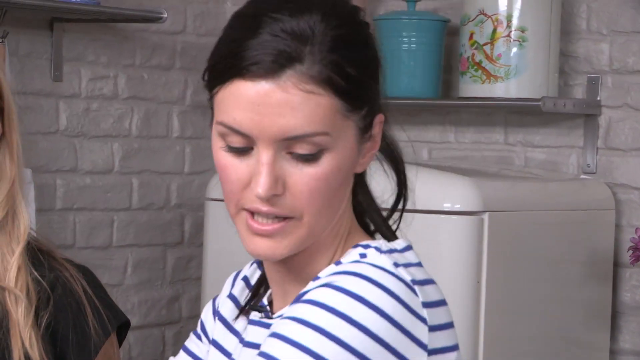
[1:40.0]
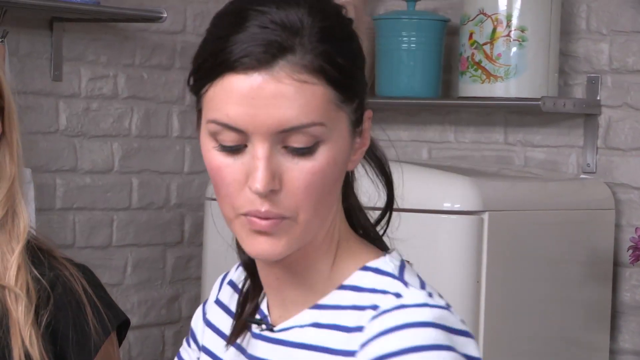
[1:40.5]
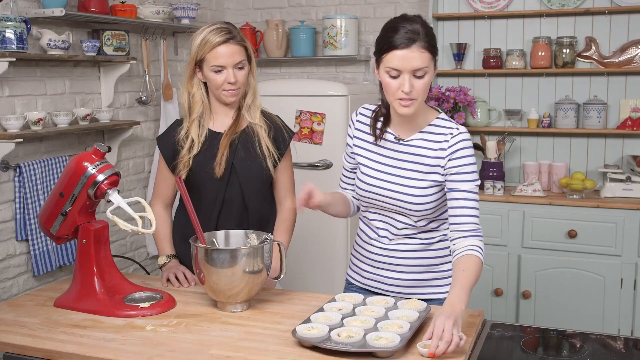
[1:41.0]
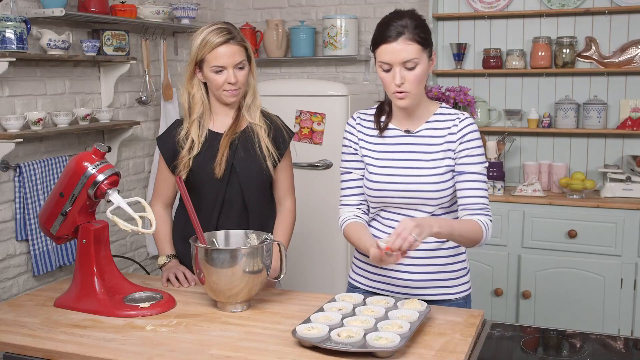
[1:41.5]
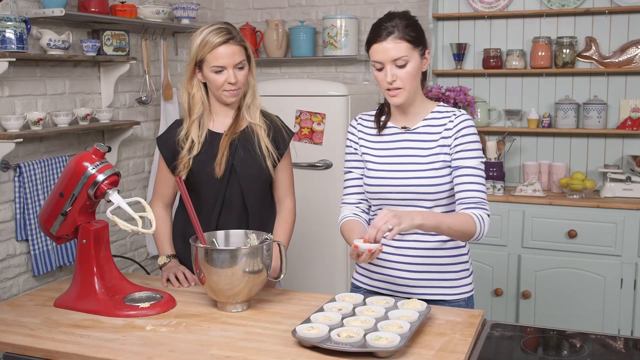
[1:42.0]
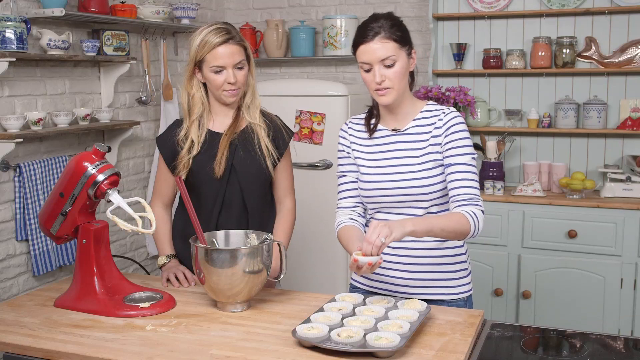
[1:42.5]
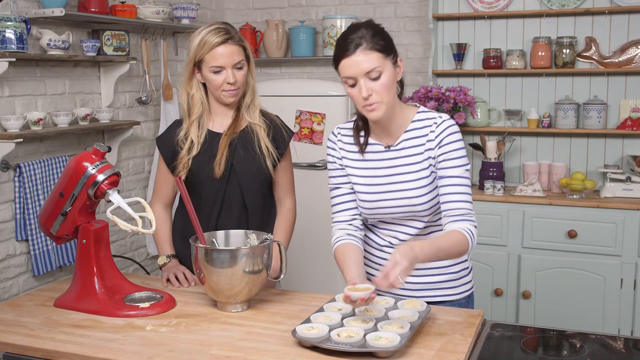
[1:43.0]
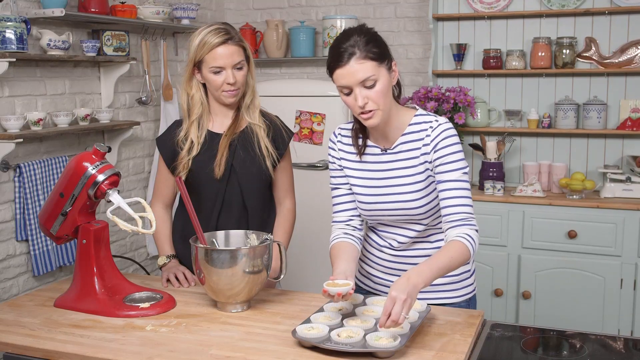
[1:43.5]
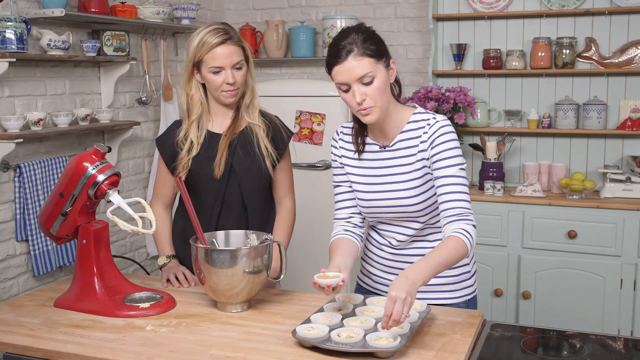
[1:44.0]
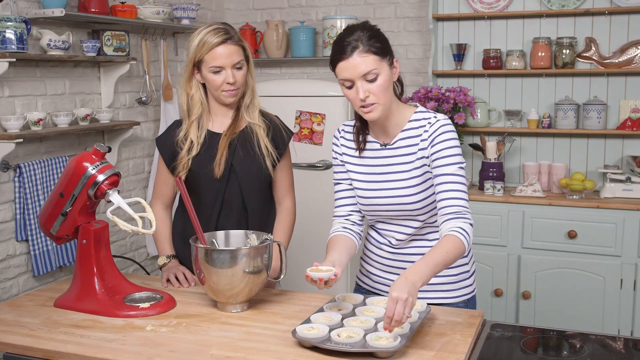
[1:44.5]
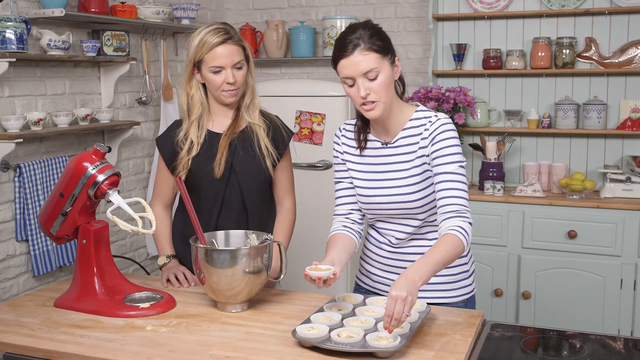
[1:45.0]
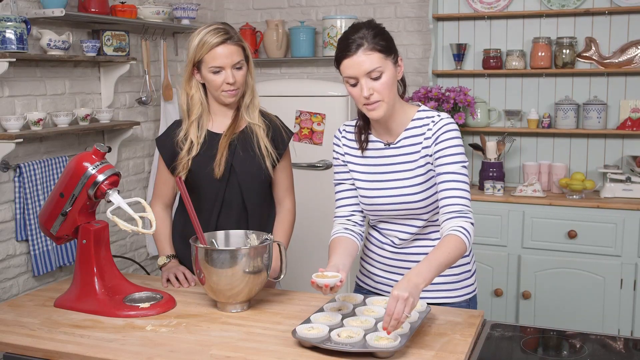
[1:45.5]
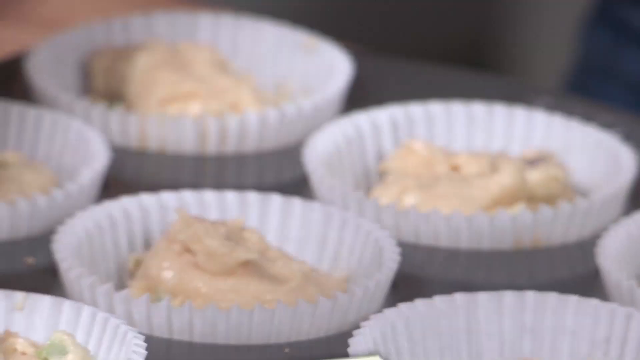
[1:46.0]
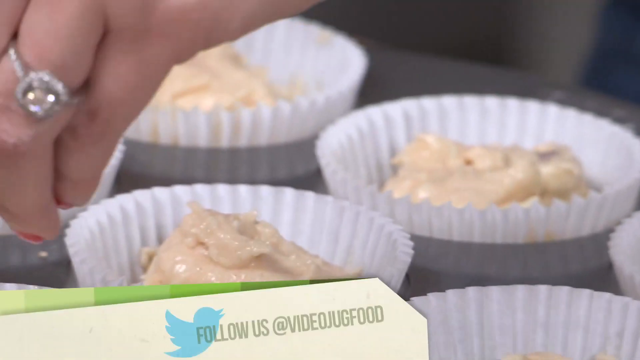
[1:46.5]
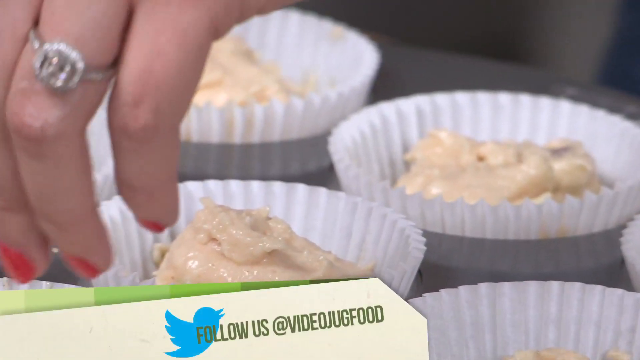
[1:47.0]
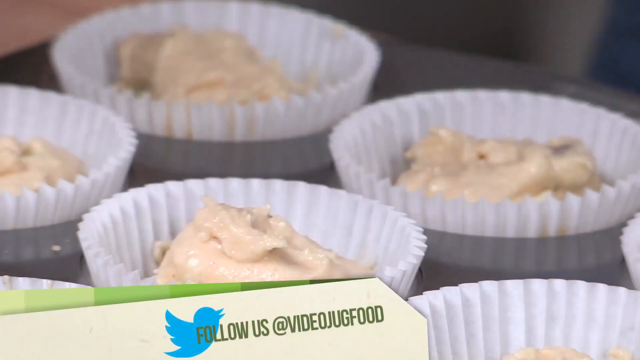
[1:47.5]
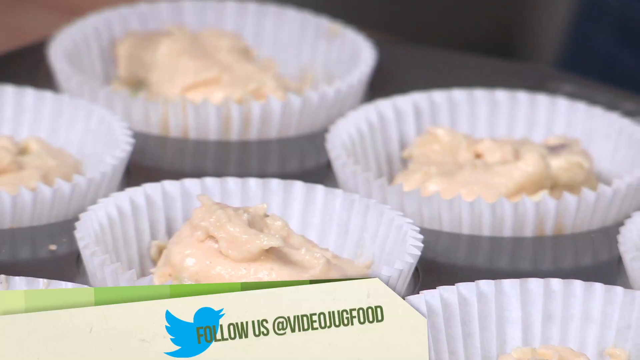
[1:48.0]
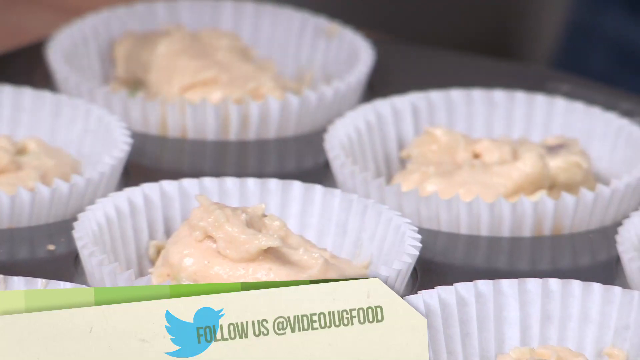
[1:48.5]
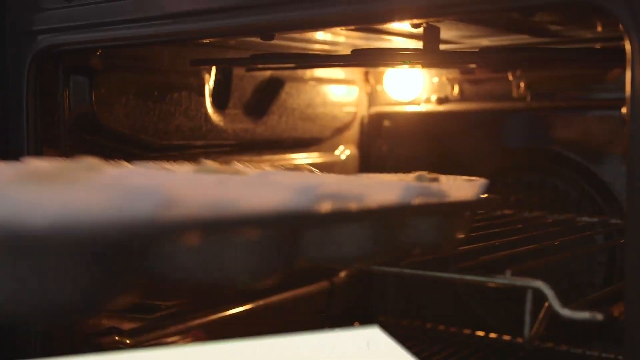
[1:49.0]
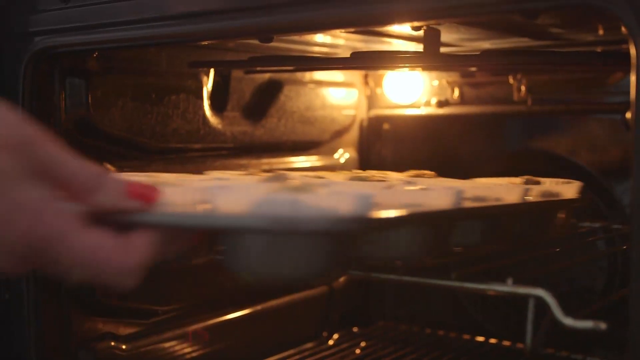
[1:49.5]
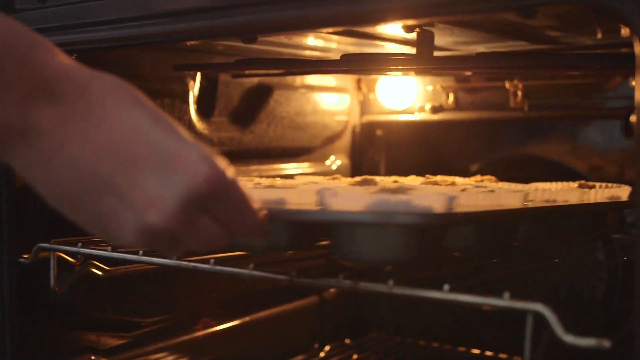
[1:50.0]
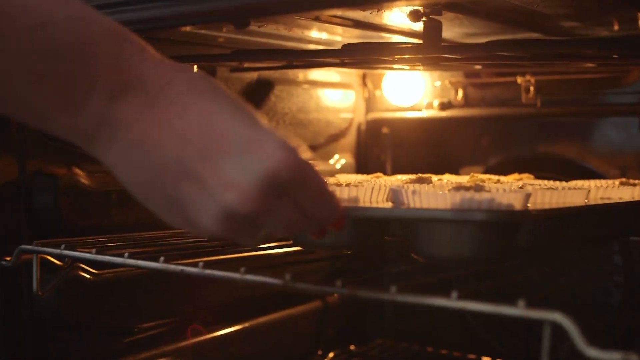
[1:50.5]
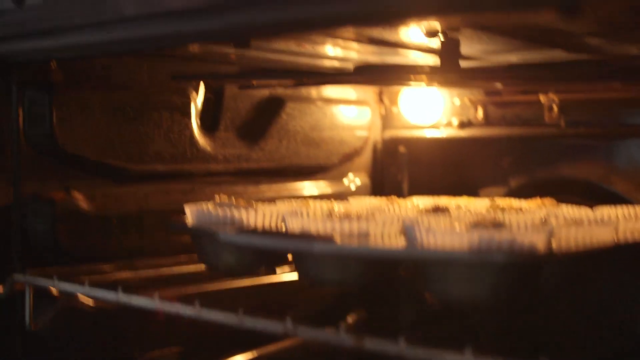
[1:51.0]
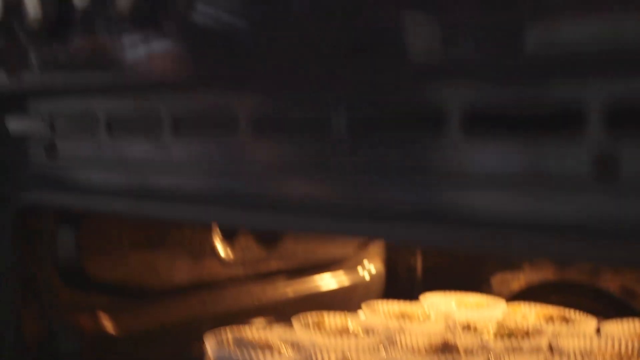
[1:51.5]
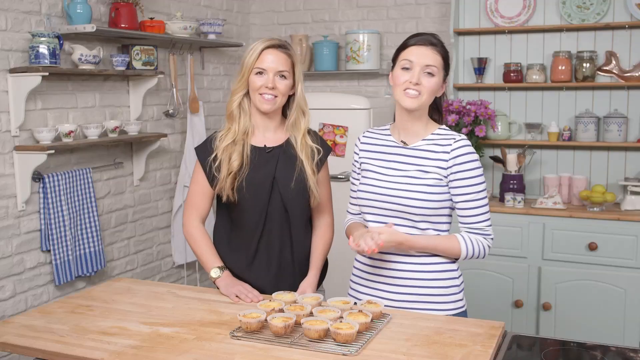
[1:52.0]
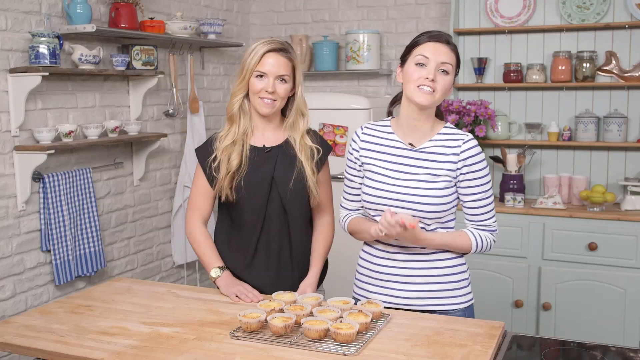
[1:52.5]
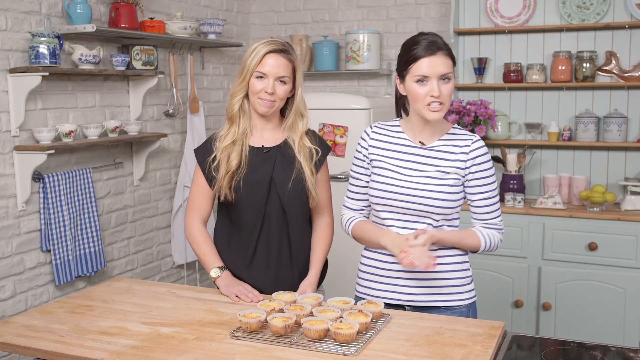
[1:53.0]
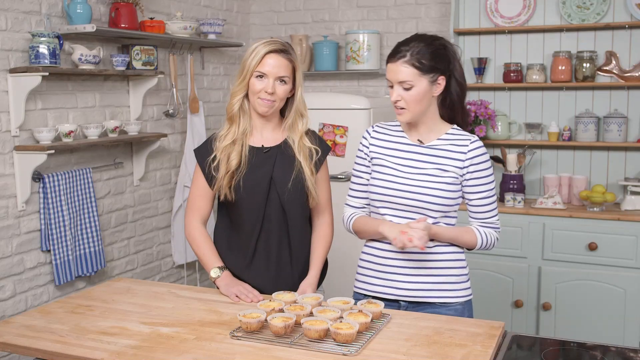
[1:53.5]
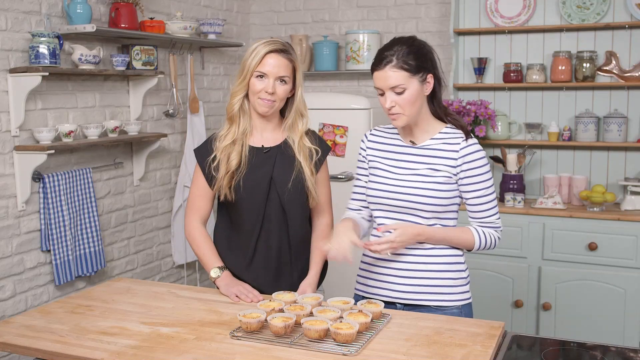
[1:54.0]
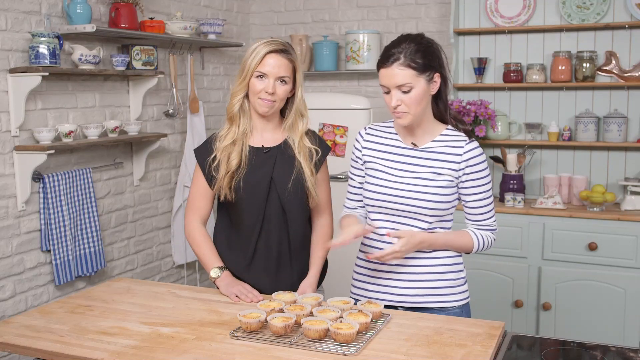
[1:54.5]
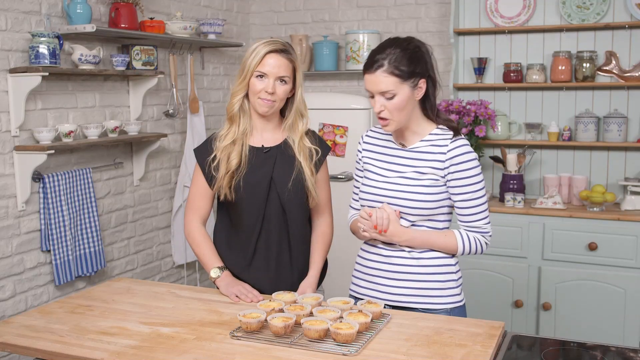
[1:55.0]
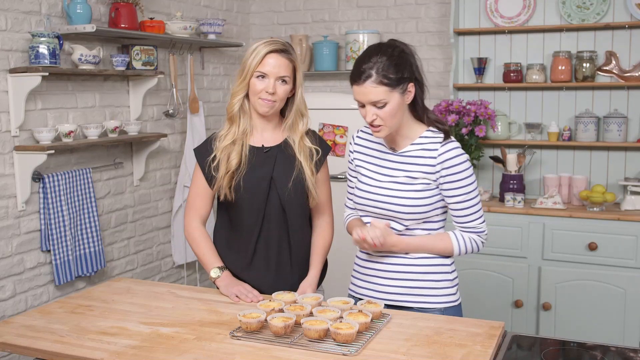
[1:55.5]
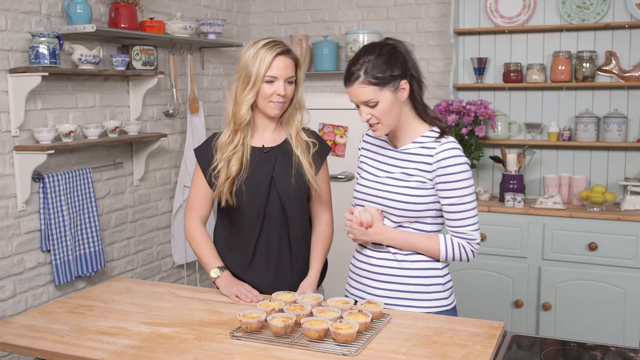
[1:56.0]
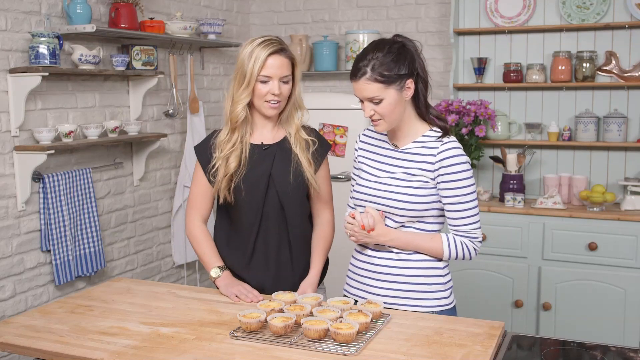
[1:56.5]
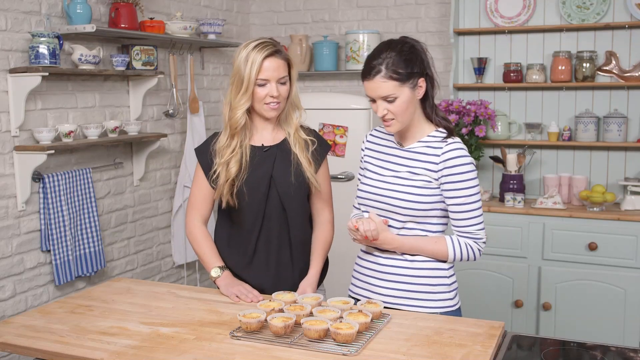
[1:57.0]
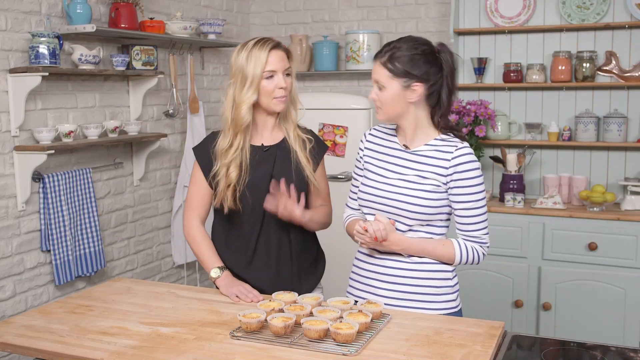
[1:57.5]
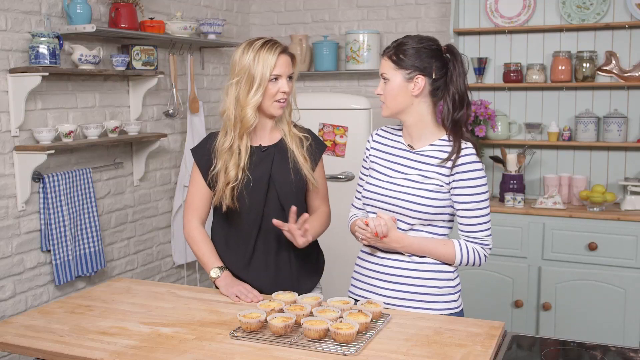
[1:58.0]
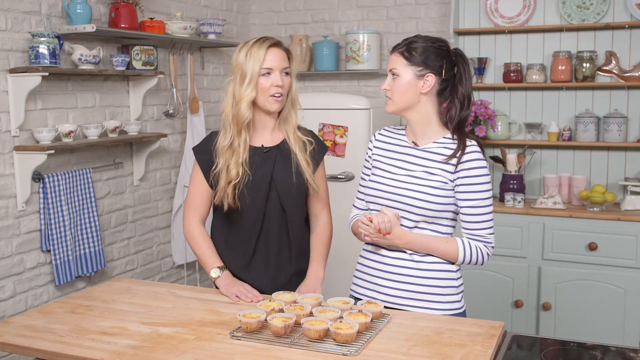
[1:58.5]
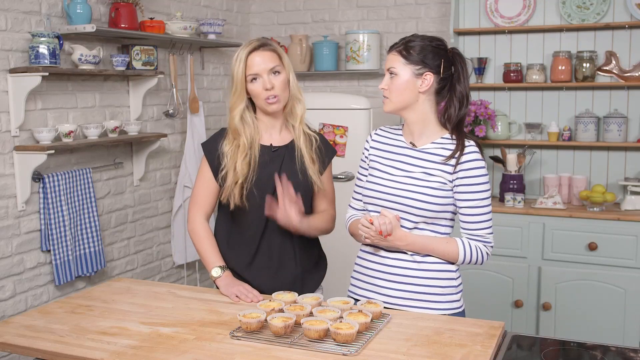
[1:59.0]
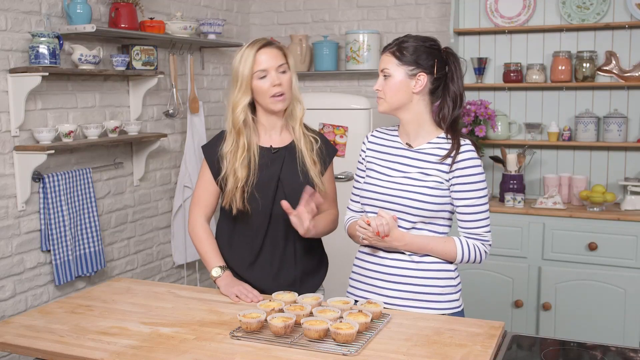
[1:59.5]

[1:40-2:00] They seem to be prepping the cupcake pans and adding more ingredients to the tops. The girl on the left seems to be adding white chocolate chips to the tops of the cupcakes. One of them seems to place the cupcakes, and the camera pans over to an angle of them. They continue to speak in front of the camera, and the cupcakes appear to be done.